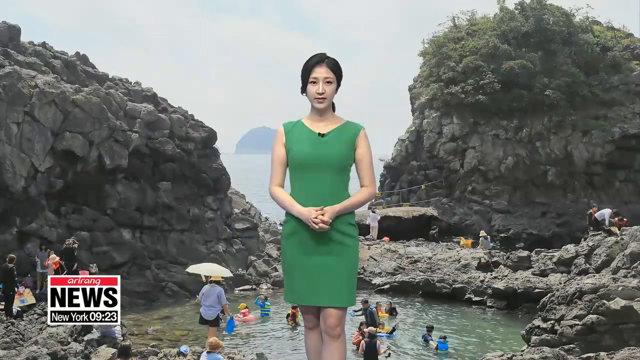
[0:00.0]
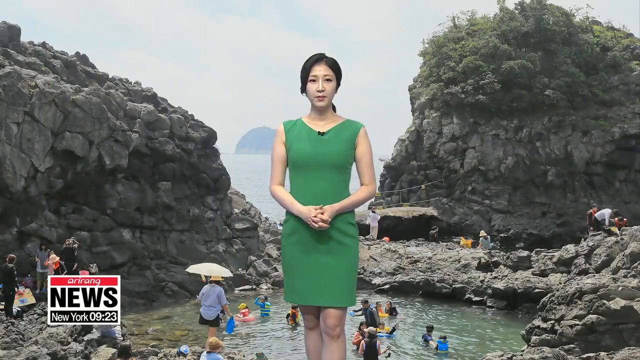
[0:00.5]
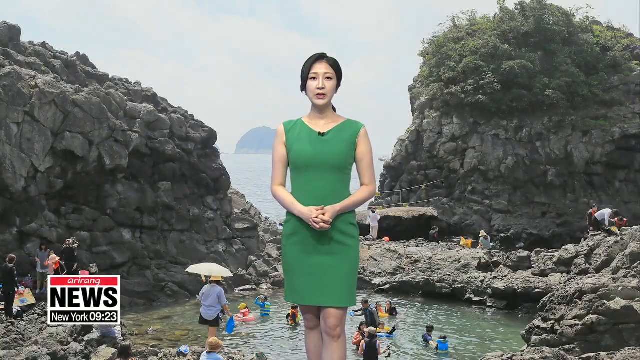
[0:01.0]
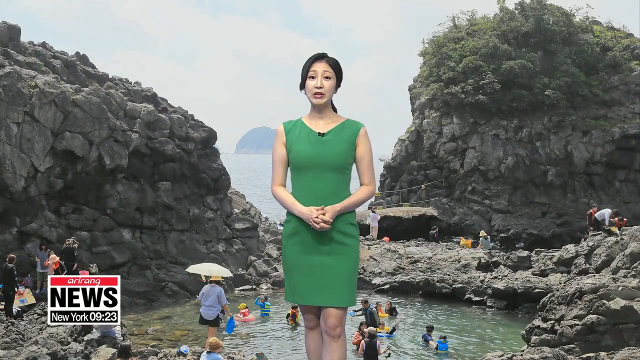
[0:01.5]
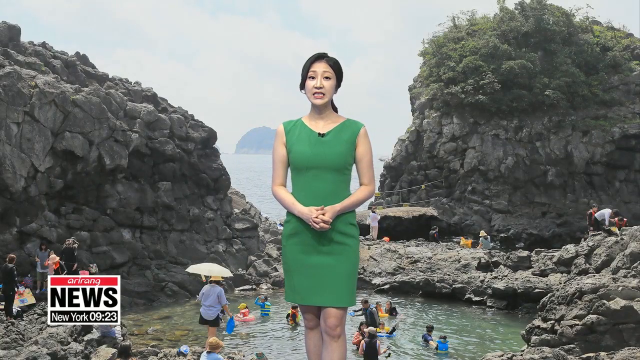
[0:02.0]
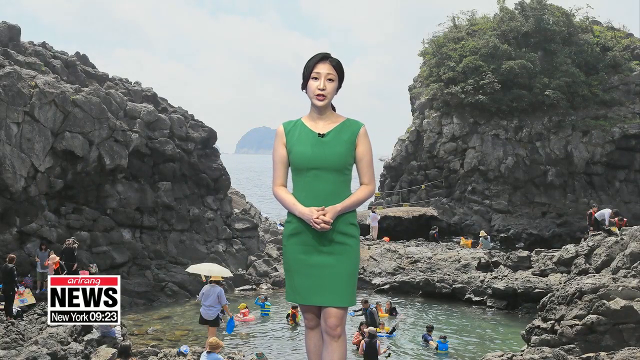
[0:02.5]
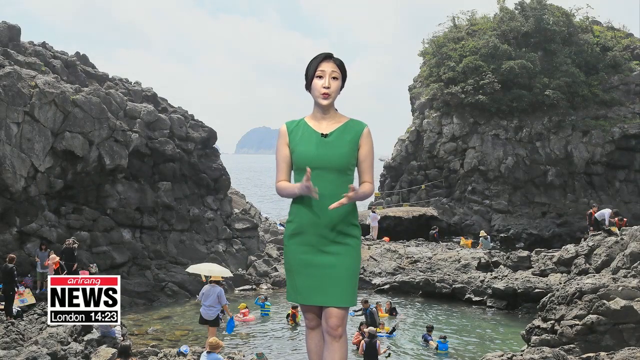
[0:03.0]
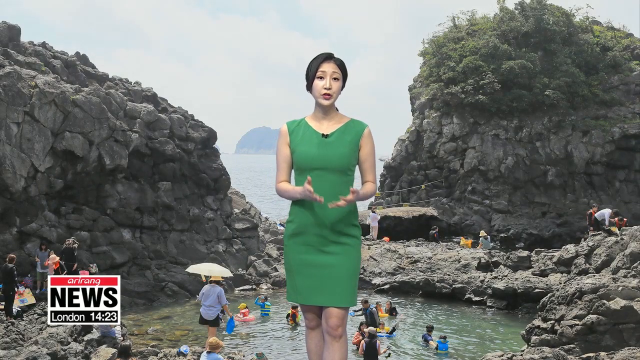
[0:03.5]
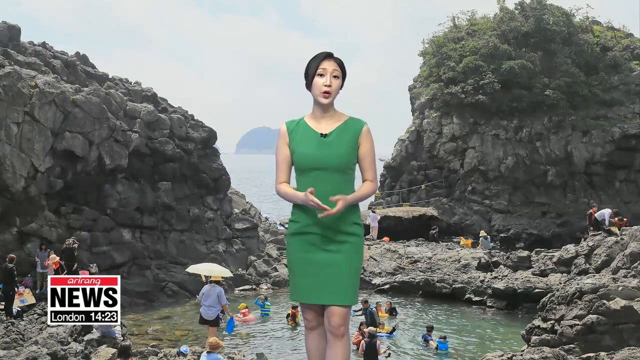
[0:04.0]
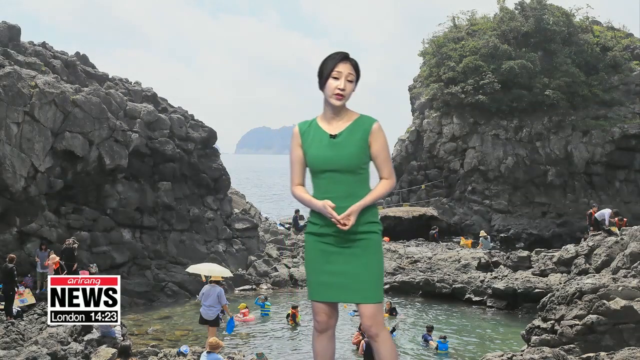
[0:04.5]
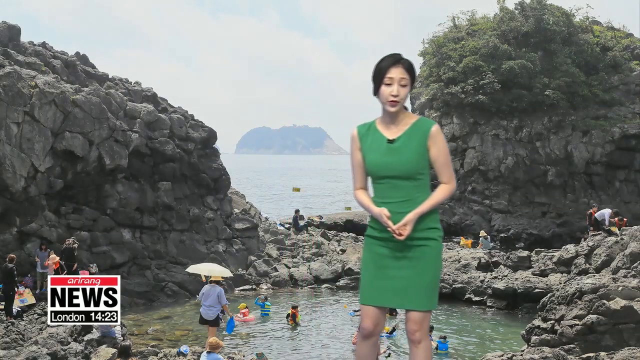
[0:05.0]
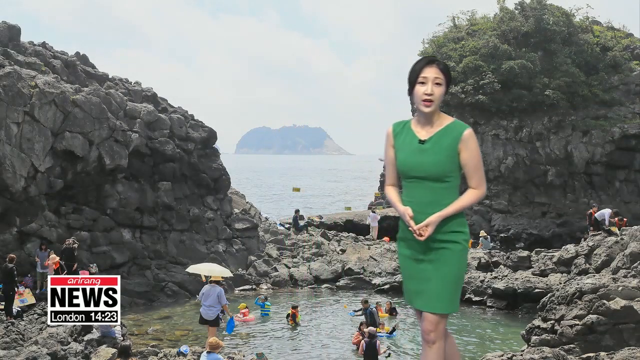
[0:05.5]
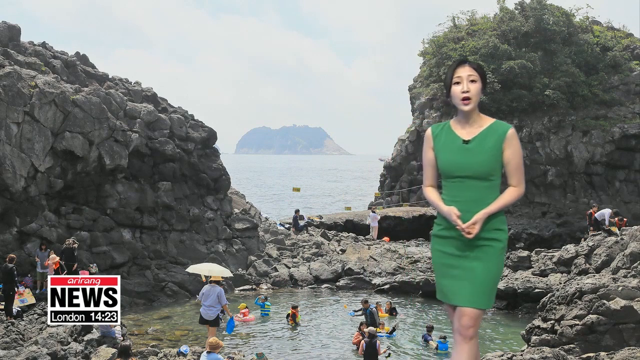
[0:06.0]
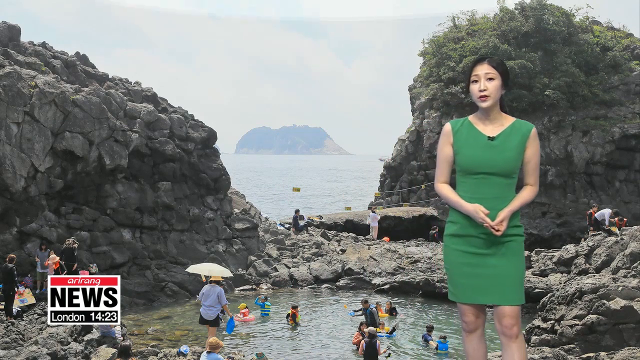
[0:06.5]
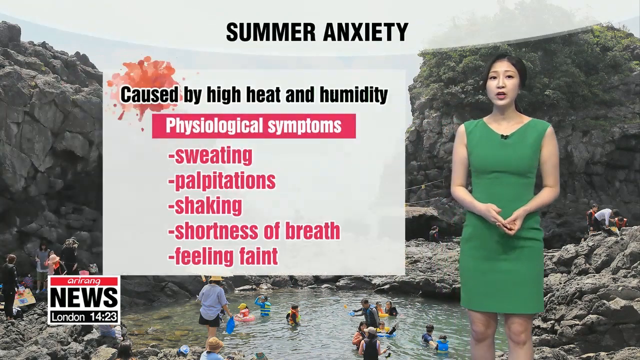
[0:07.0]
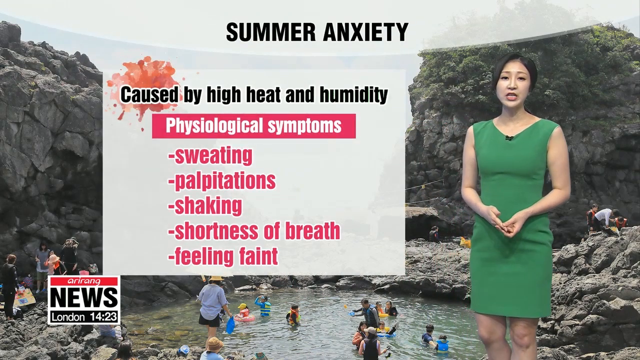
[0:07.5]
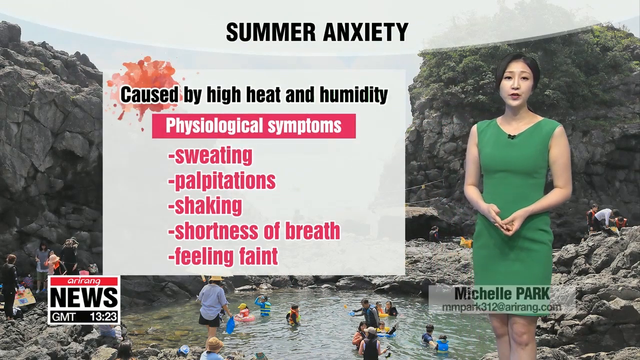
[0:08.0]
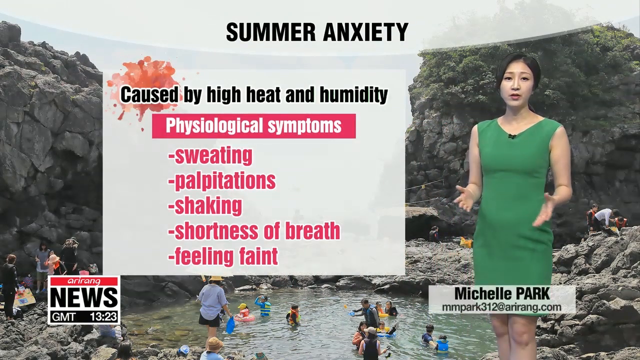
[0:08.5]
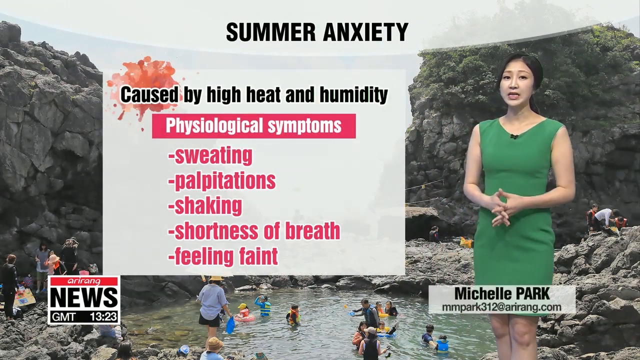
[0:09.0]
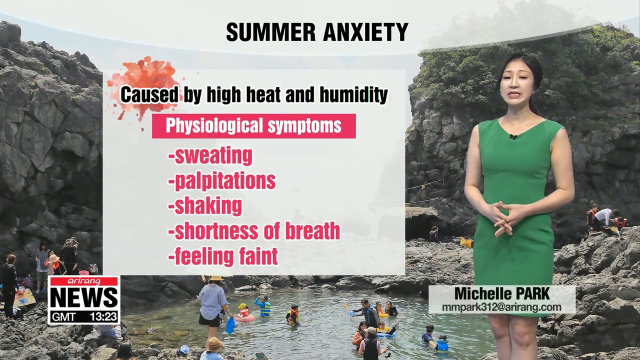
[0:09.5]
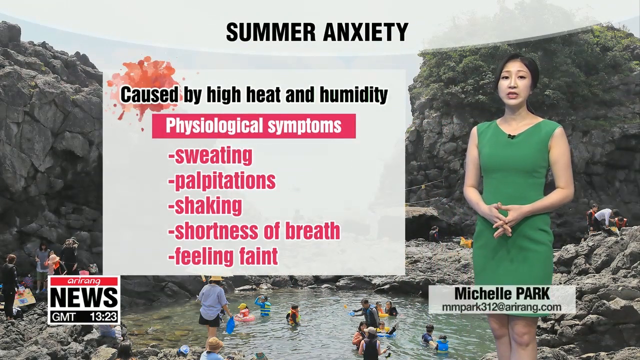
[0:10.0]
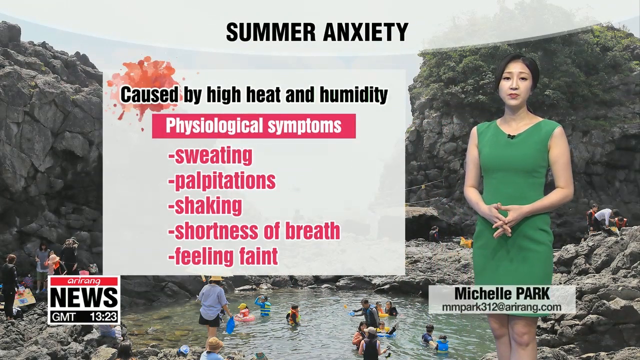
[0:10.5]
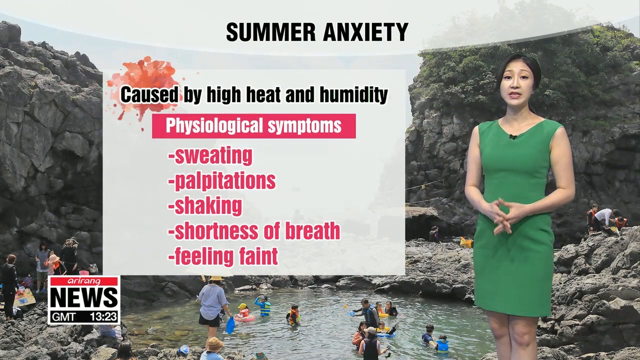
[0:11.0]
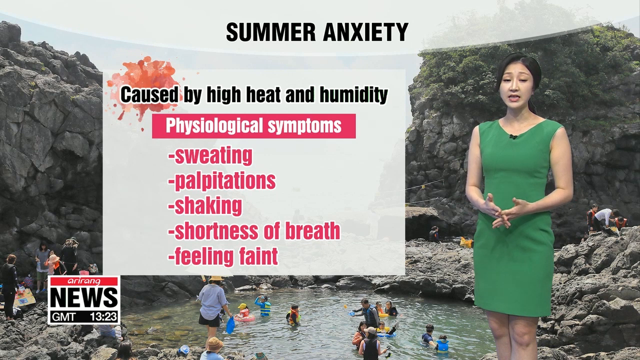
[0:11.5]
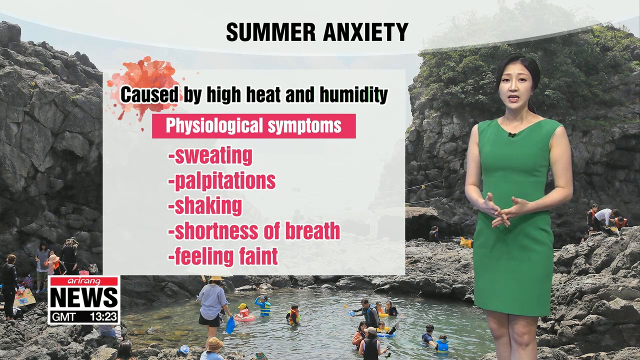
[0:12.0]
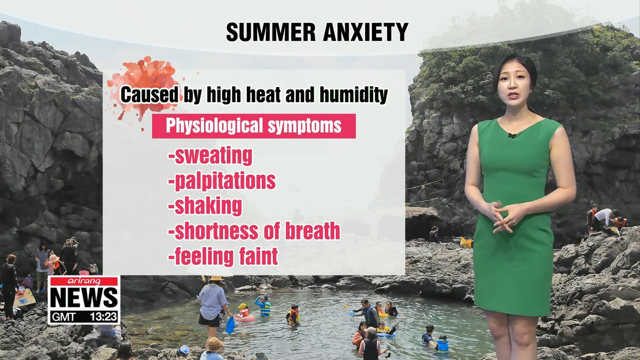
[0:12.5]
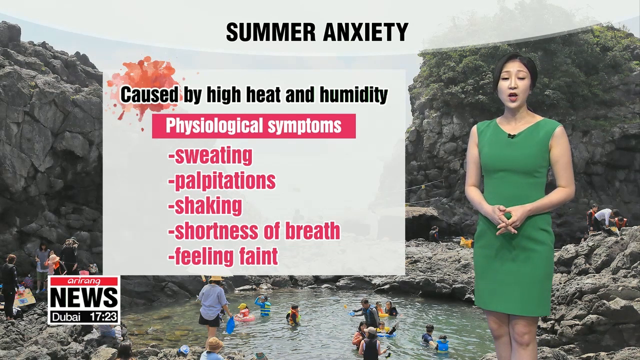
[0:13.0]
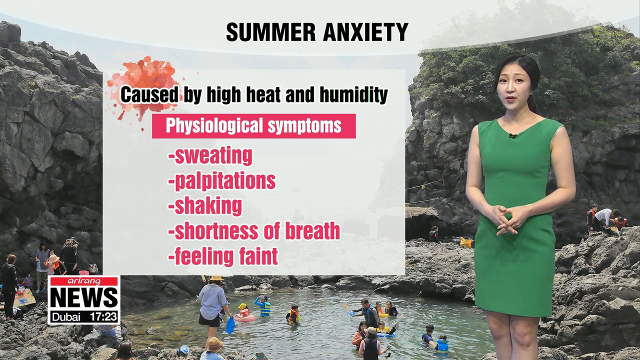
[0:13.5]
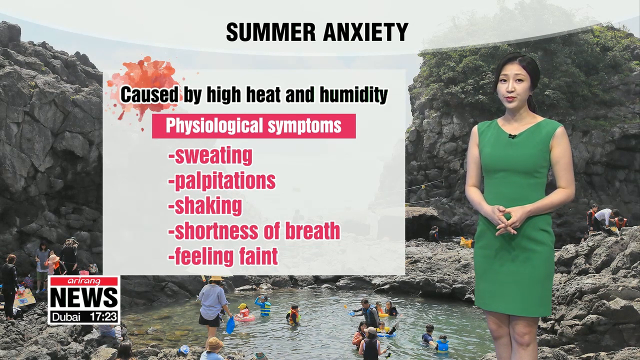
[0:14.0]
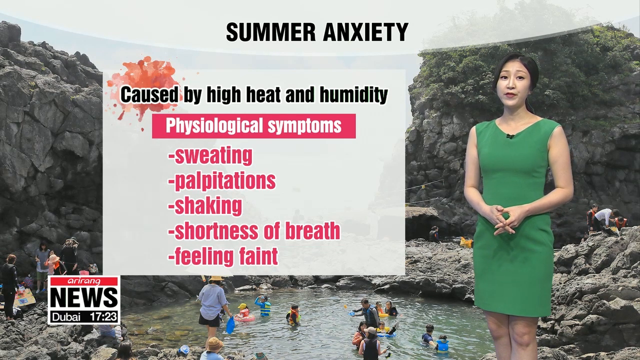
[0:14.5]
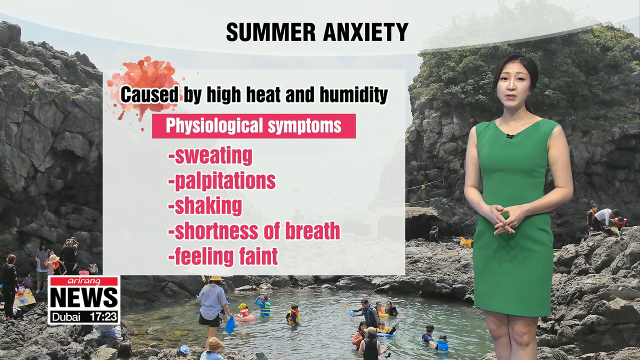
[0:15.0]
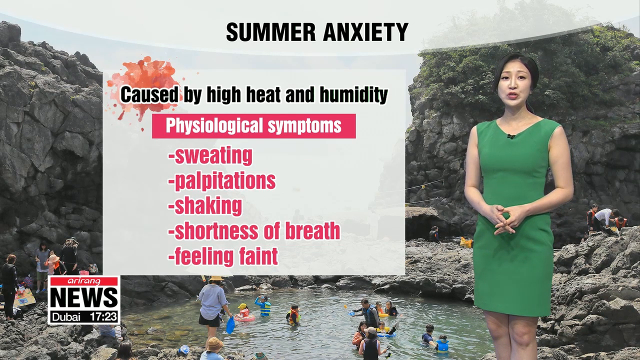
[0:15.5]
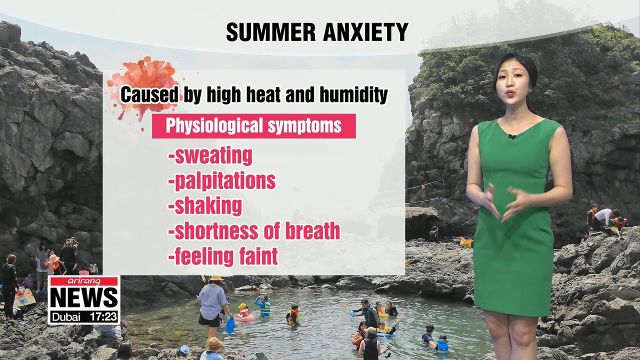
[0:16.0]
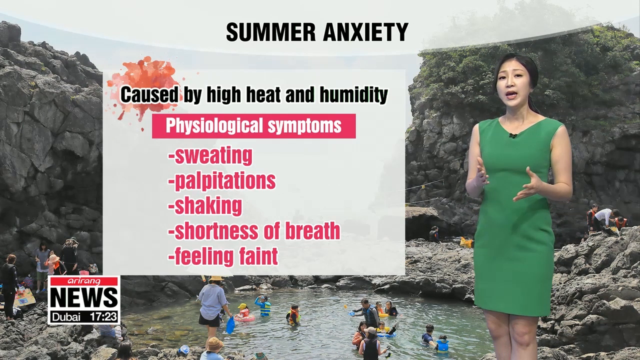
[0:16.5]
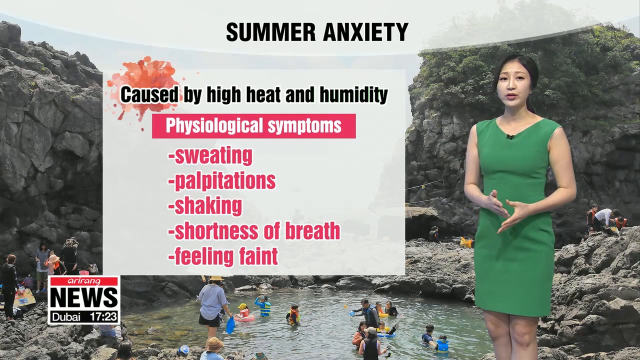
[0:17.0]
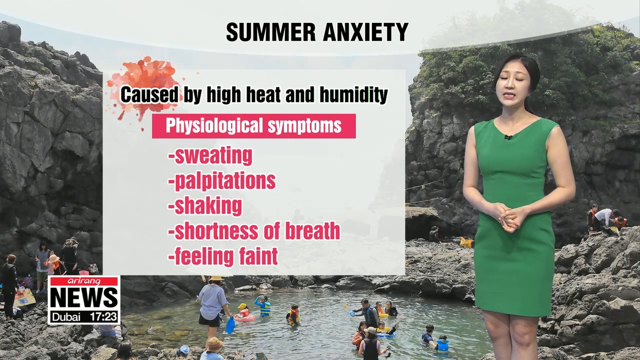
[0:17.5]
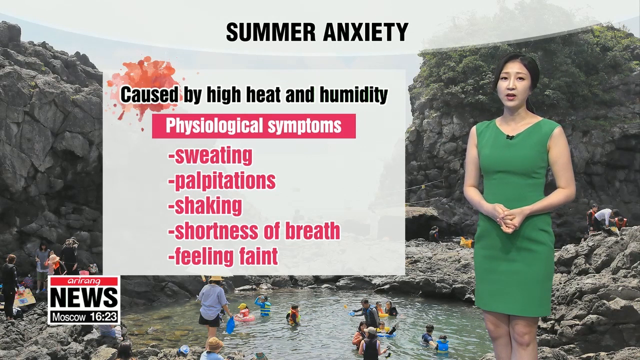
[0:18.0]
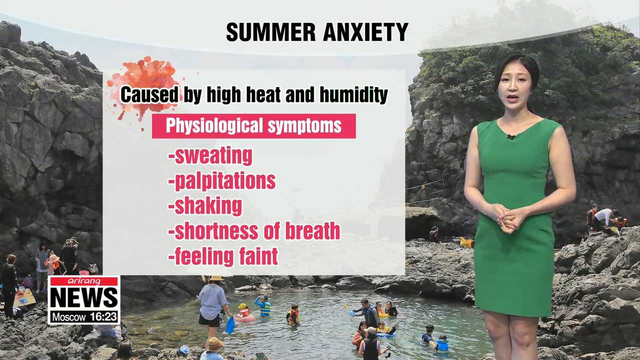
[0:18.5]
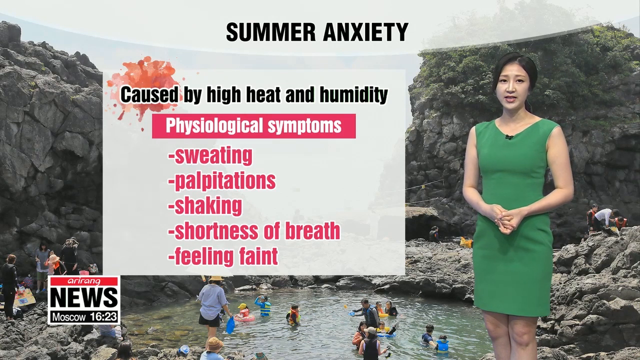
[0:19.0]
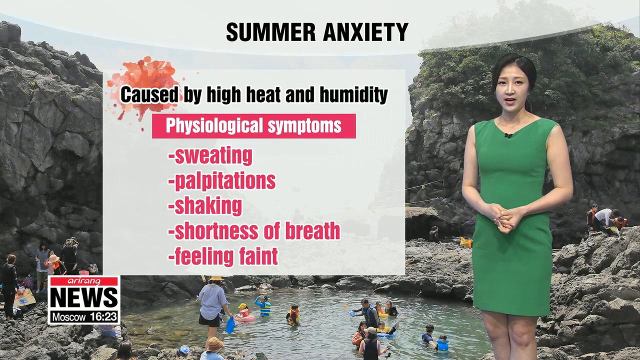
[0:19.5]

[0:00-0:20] A lady in a green dress, who seems to be aged between 30 and 35, stands in a studio talking. She has black hair and a normal body size. A message appears on the screen reading "summer anxiety caused by high heat and humidity" and "psychological symptoms, sweating, palpitations, shaking, shortness of breath, feeling faint." In the background behind her is some kind of pool where kids, mothers and adults seem to be swimming or cooling themselves down, apparently enjoying what could be a summer or hot day. Also in the background are things that look like mountains, with rocks around the place where people are enjoying the pool.